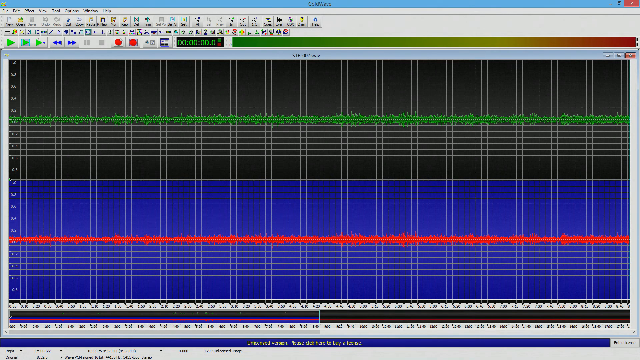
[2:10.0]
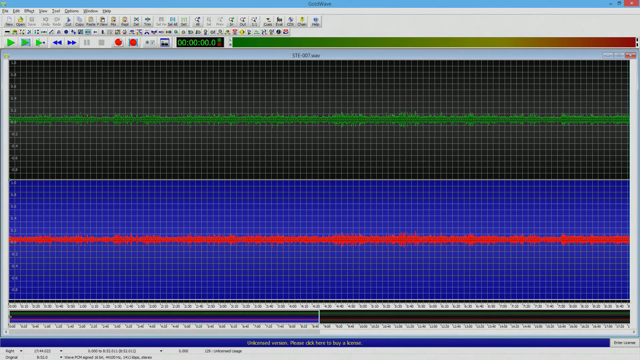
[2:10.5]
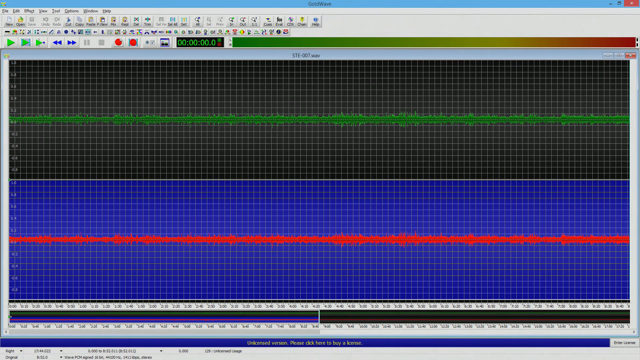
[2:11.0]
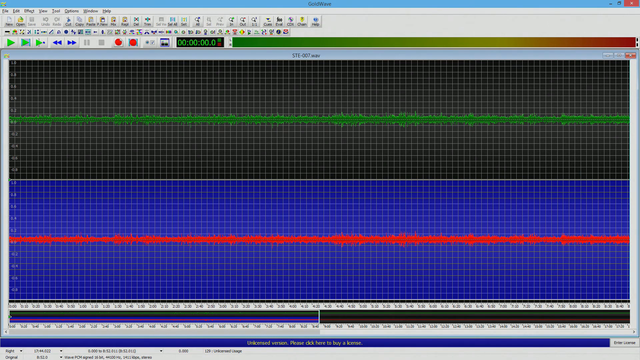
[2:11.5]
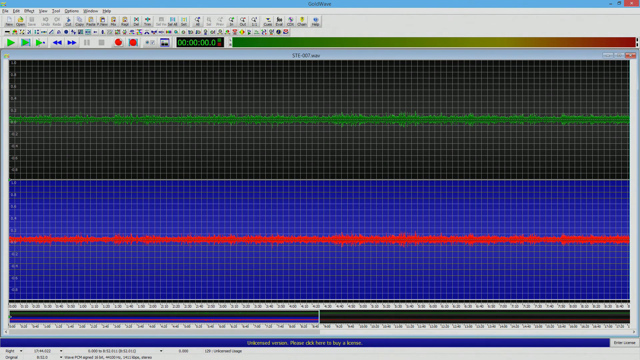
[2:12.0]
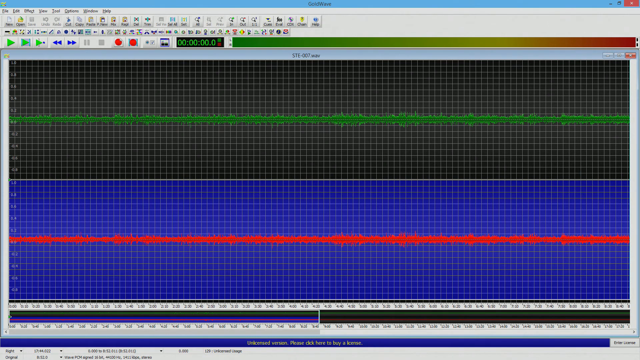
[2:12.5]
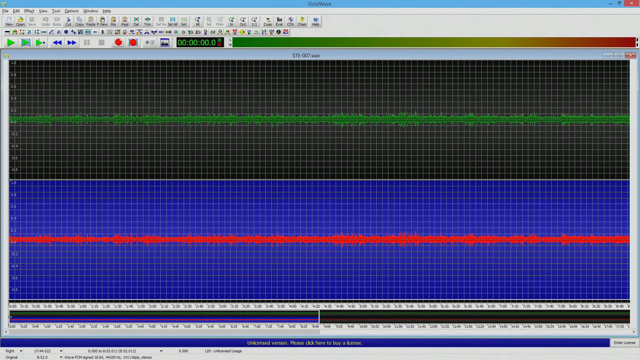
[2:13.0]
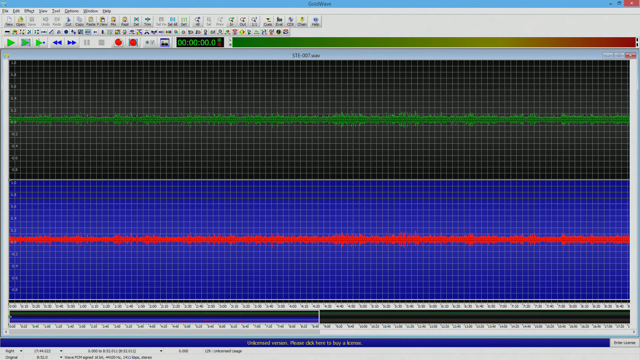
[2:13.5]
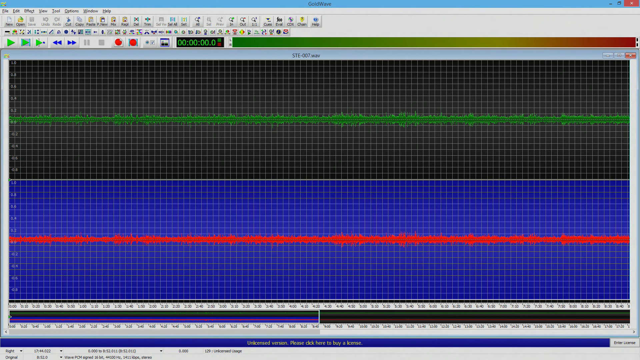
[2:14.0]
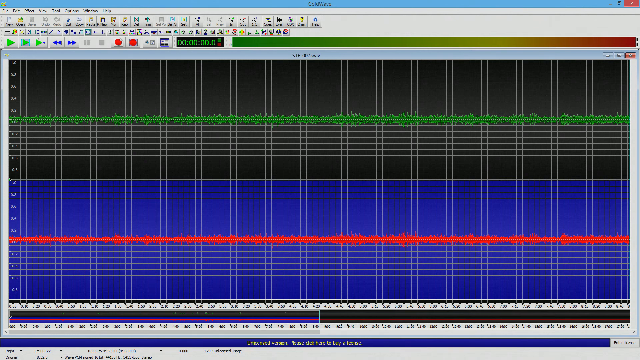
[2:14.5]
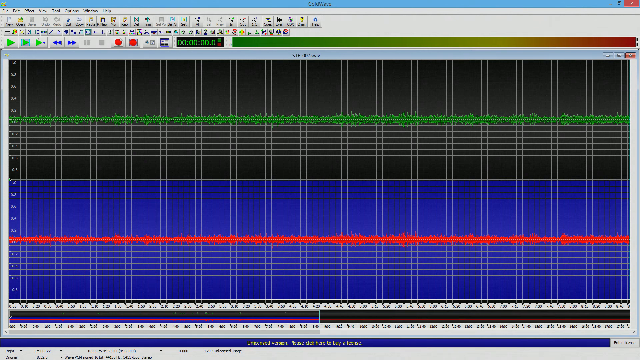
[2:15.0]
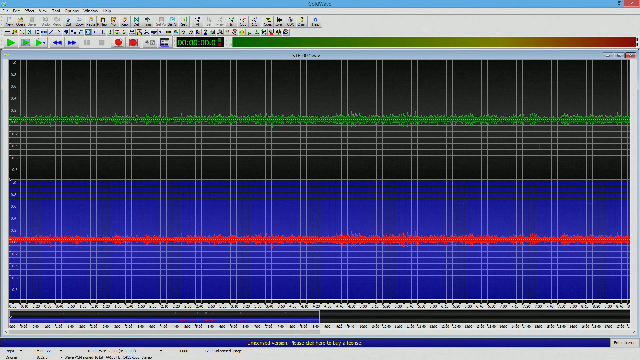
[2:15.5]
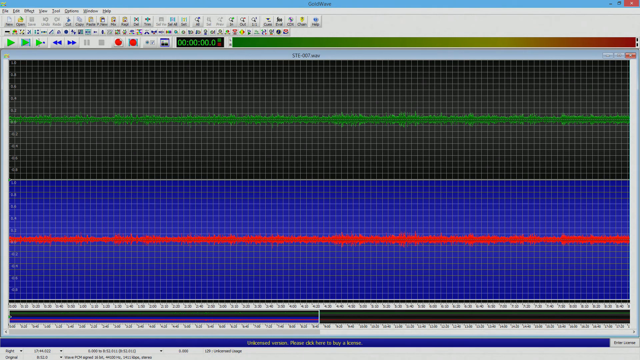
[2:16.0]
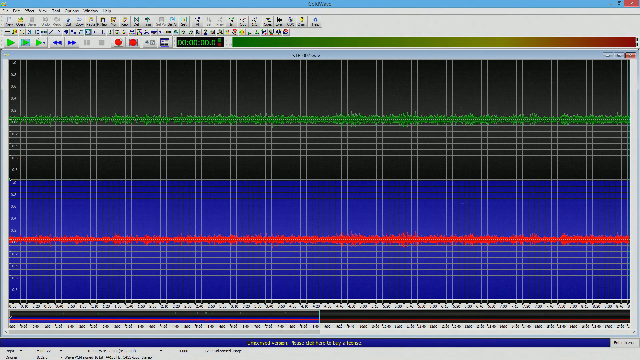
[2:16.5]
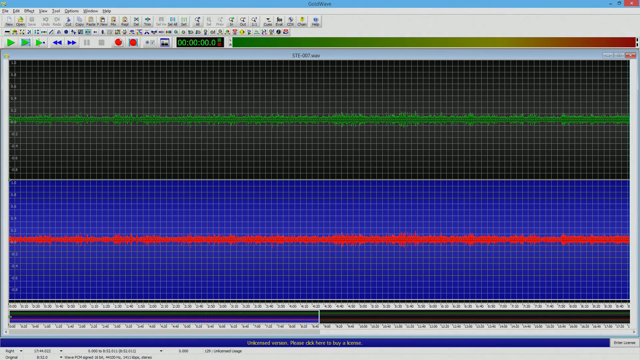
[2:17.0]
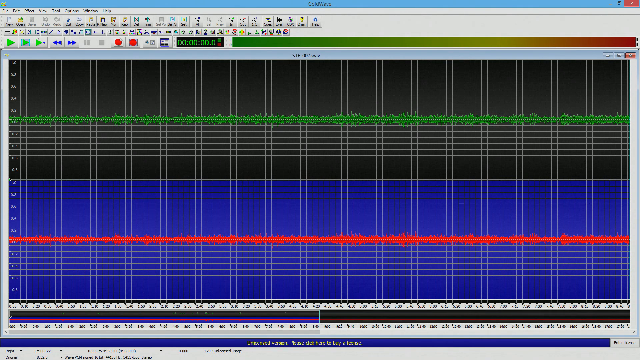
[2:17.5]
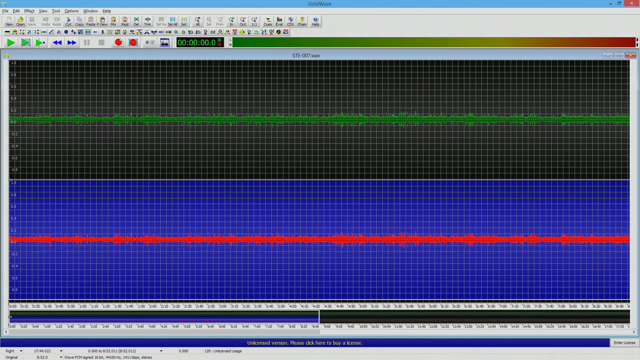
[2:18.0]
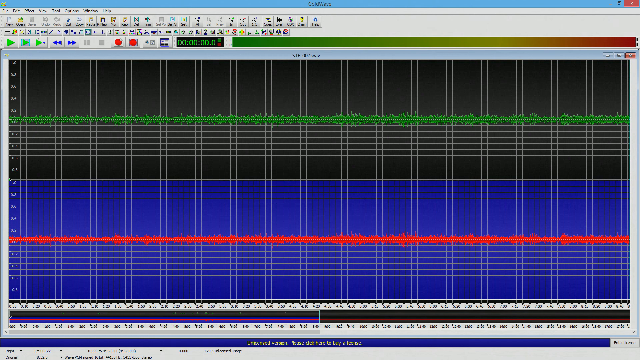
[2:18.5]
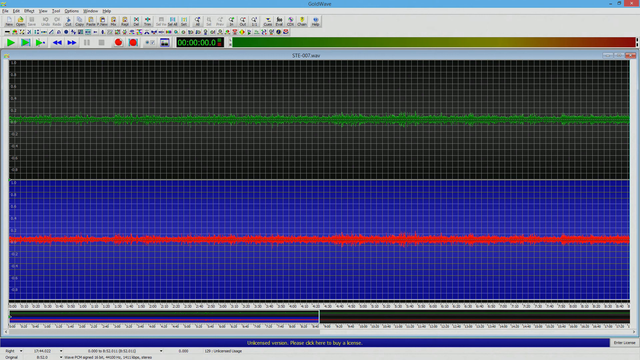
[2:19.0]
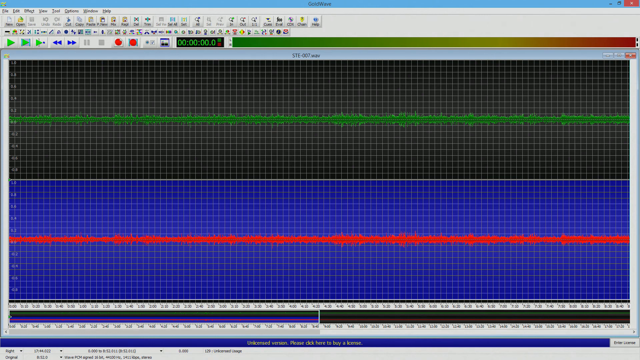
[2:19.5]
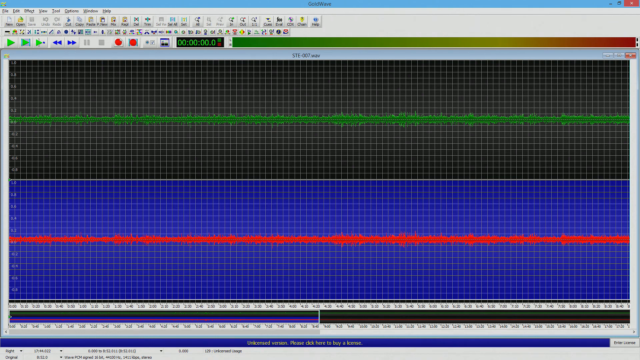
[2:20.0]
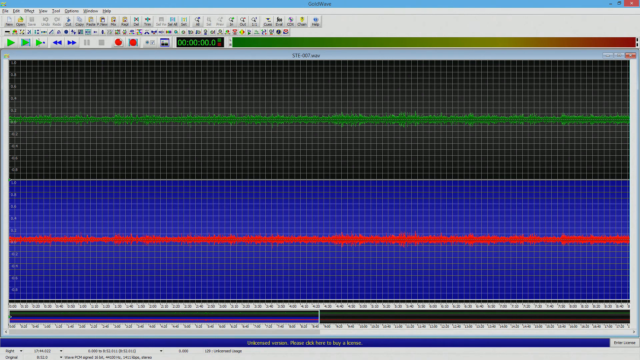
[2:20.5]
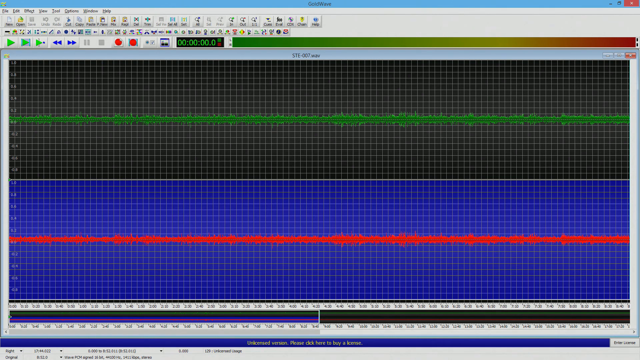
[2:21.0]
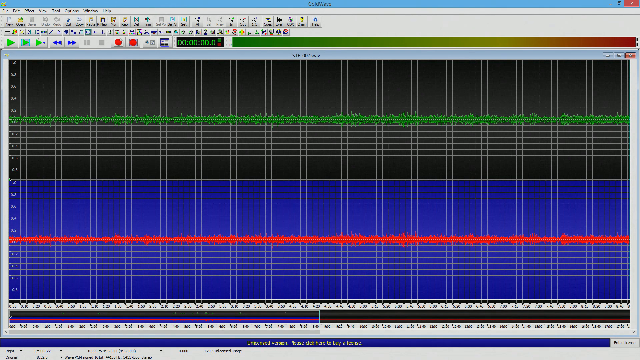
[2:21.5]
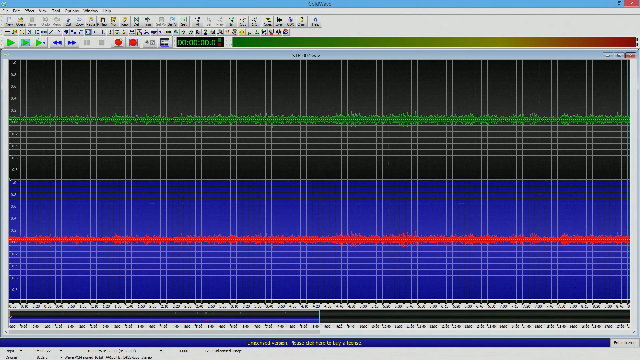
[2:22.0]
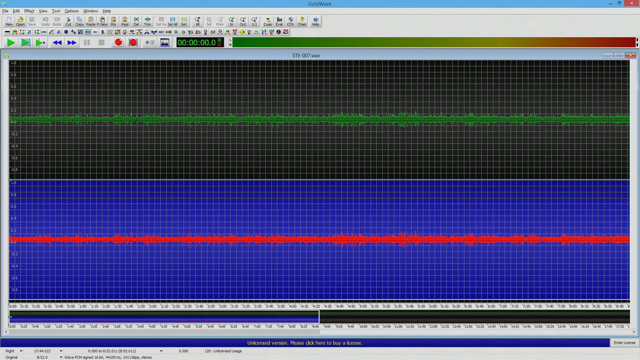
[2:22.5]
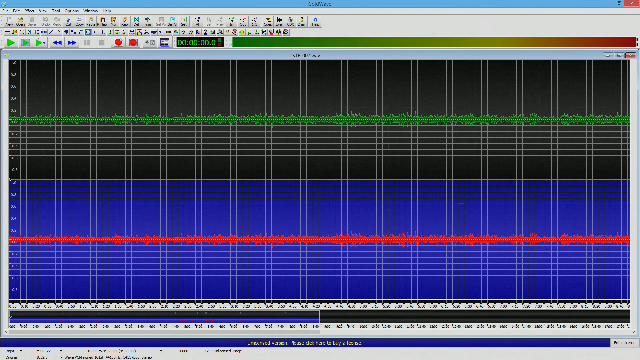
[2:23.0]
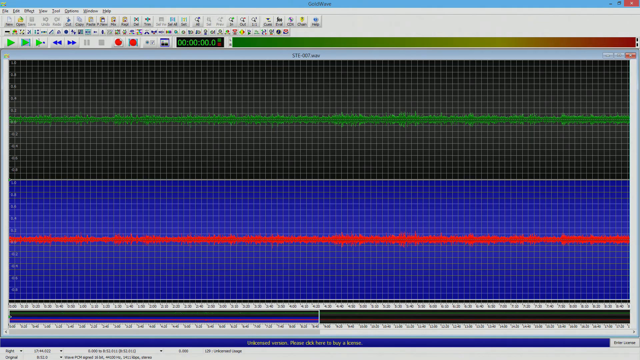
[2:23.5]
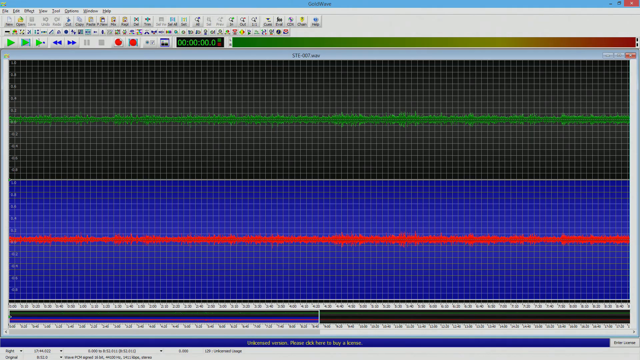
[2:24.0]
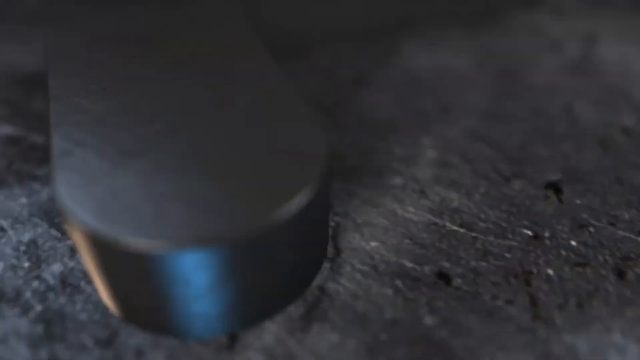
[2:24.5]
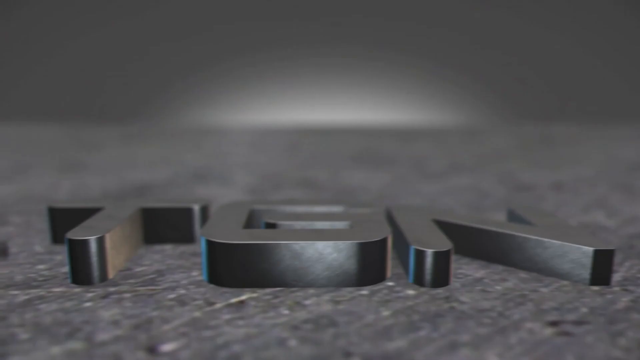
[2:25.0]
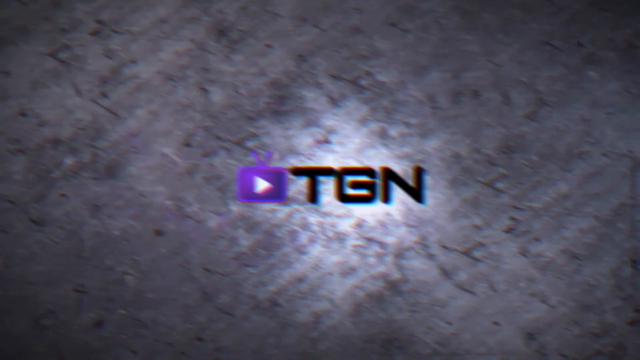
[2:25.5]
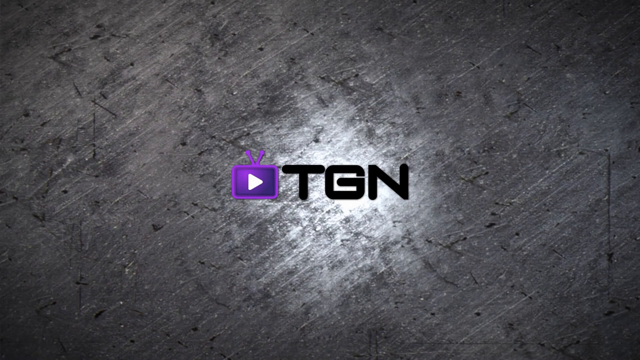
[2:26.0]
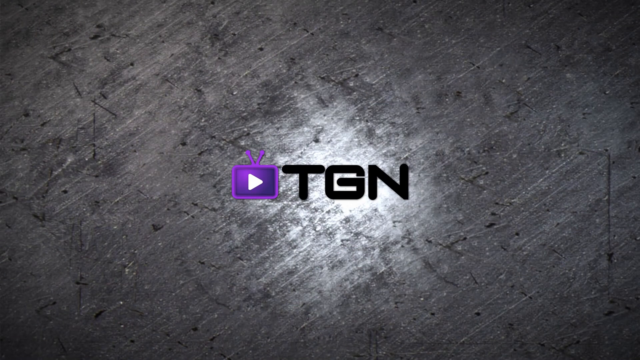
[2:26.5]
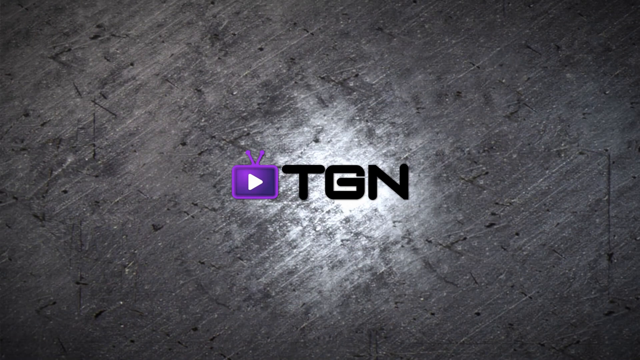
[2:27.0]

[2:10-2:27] The computer screen has a dark background in the upper portion and a bright blue-purple color in the bottom portion, with a green line running horizontally through the top portion and a red line through the bottom. The screen then breaks and some black abbreviation letters come out on the screen and swing around before the screen cuts off. The letters then read "TGN". There is a little arrow that can be clicked, surrounded by a purple box that looks like it has little ears: two things protrude from it. This is shown only very briefly, like a quick flash, and then goes away automatically.